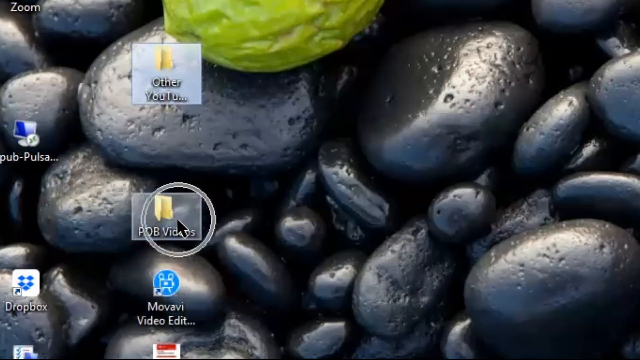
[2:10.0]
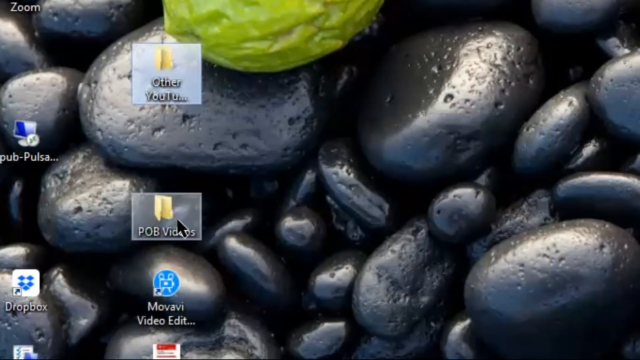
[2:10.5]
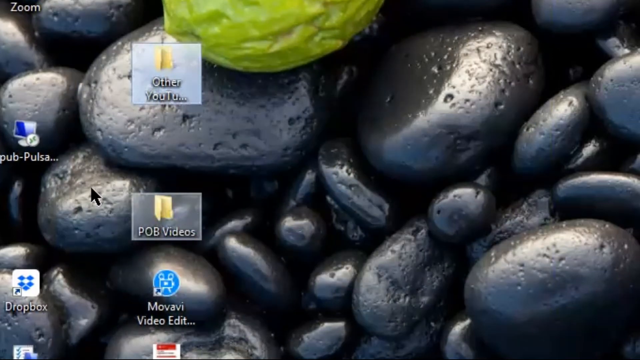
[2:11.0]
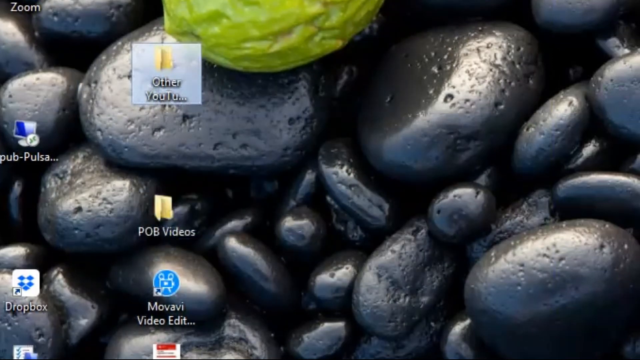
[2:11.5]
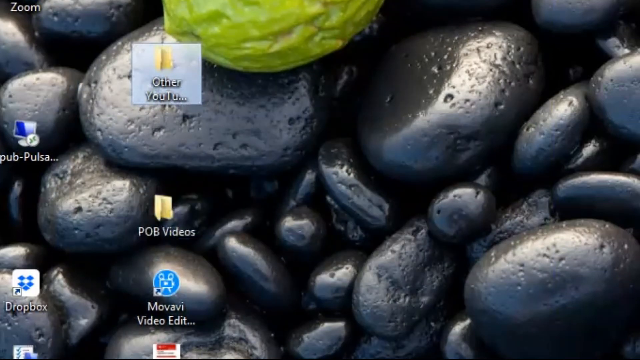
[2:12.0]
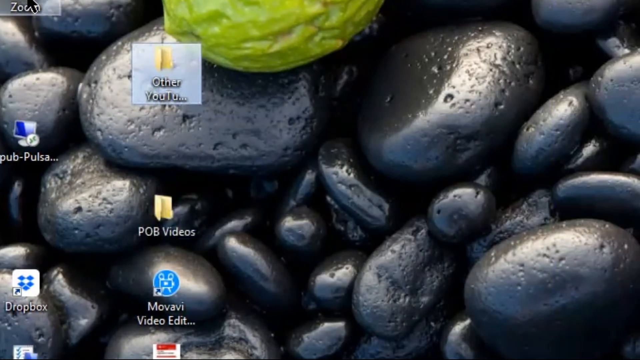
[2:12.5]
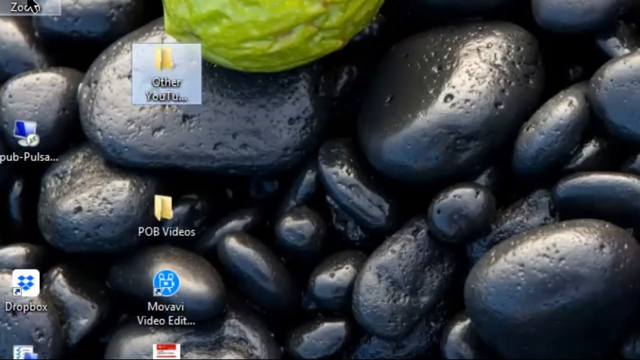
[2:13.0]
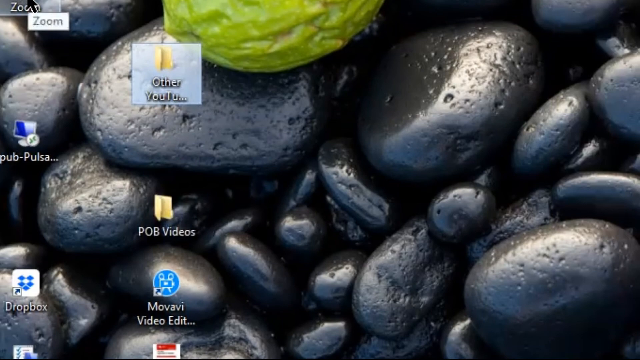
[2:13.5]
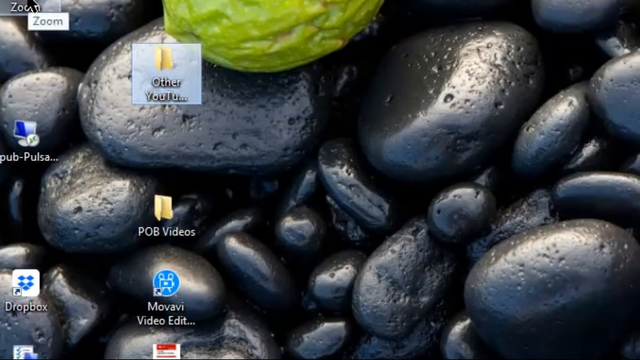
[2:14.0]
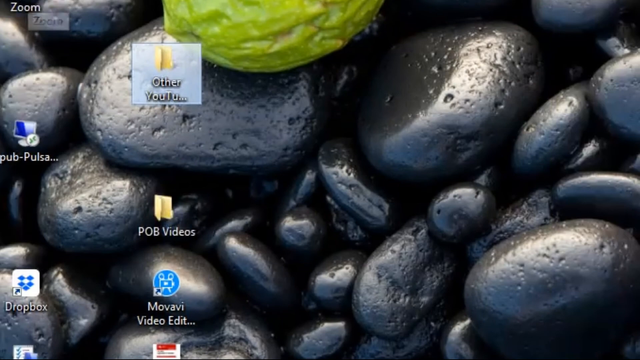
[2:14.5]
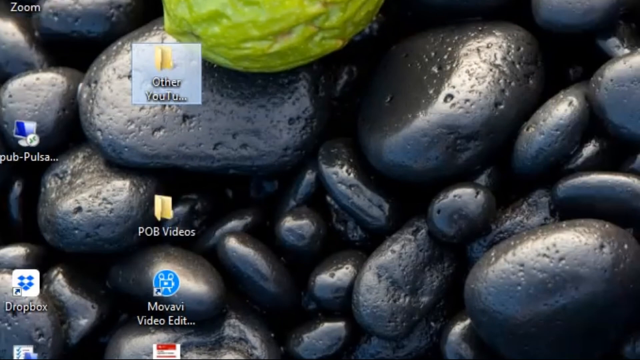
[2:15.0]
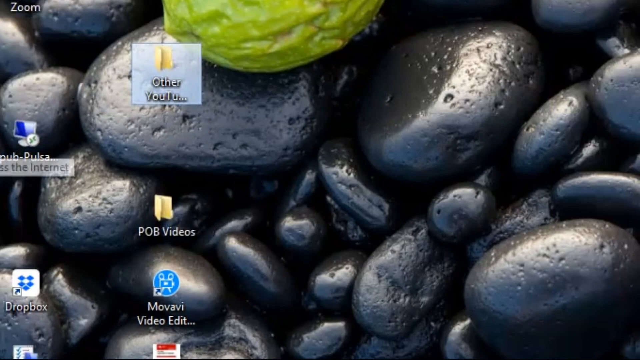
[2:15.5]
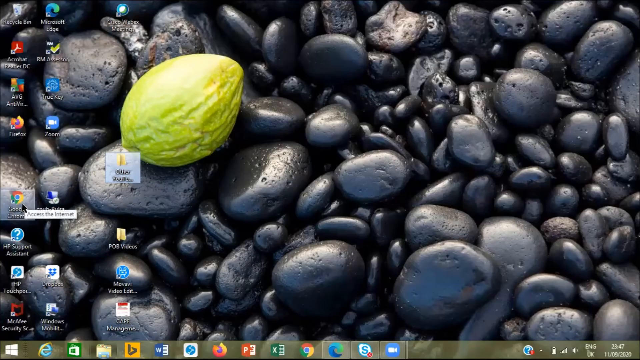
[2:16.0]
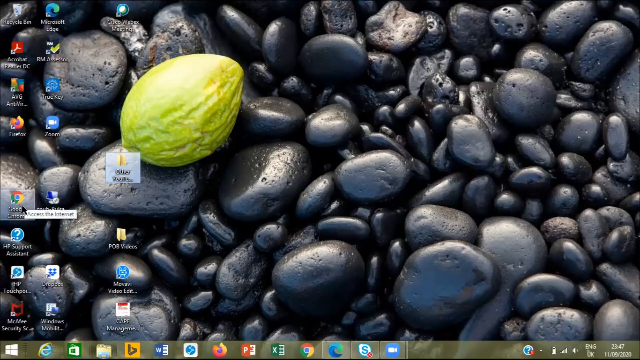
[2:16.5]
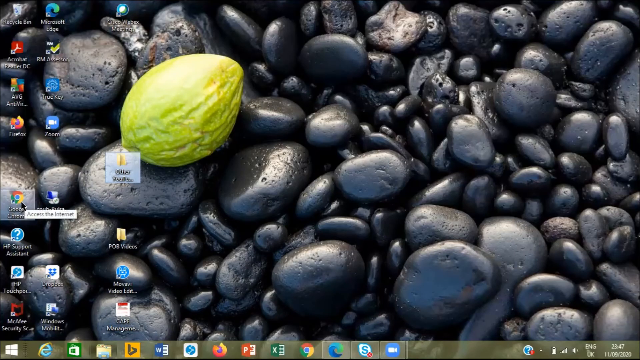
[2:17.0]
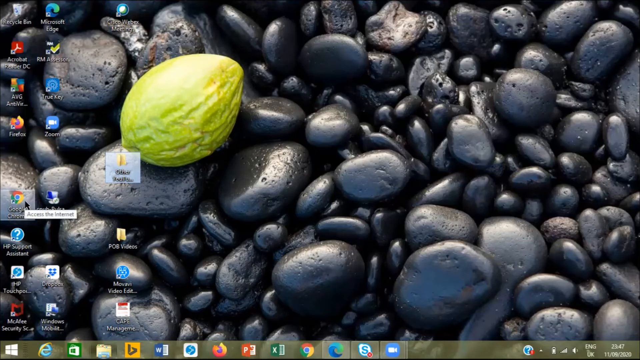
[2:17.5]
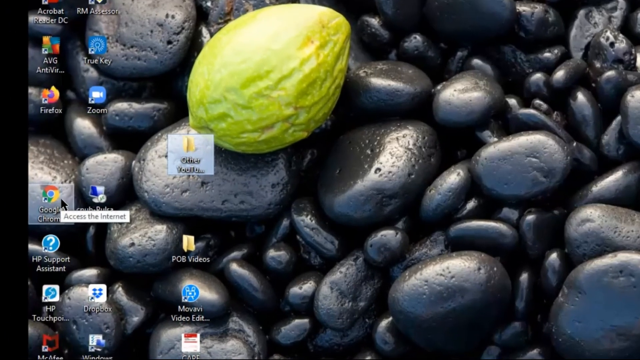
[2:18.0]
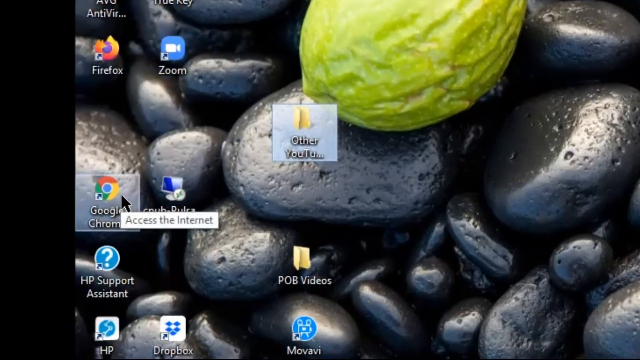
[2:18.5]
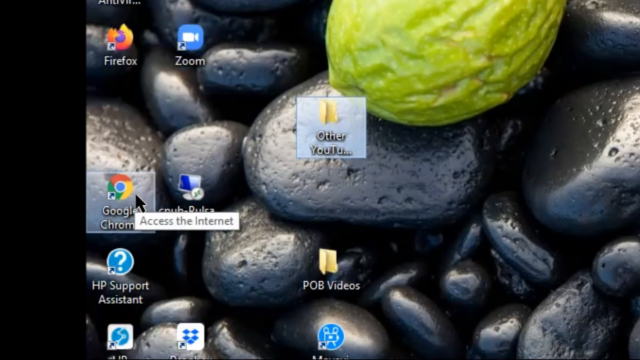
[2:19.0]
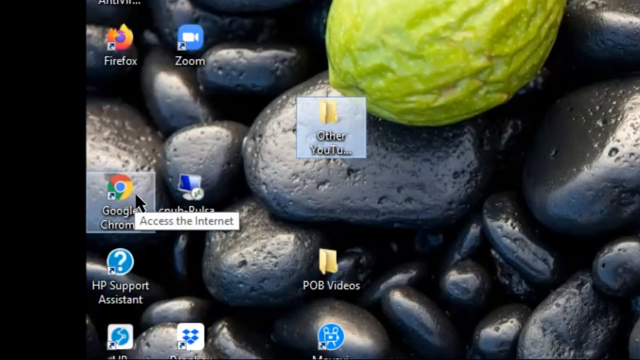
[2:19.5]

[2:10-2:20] POV videos is not clicked; the mouse goes up to the top, but it cannot be seen because the view is zoomed in on POV videos. The view zooms back out, and the mouse hovers over Google Chrome, where a little pop-up says "access the internet". The view zooms in on it, revealing other items on the computer: Firefox, Zoom, an HP Support item, a file labeled "Other", and YouTube. When any of these is selected, a gray shadow box kind of appears over it. There is also something for Dropbox.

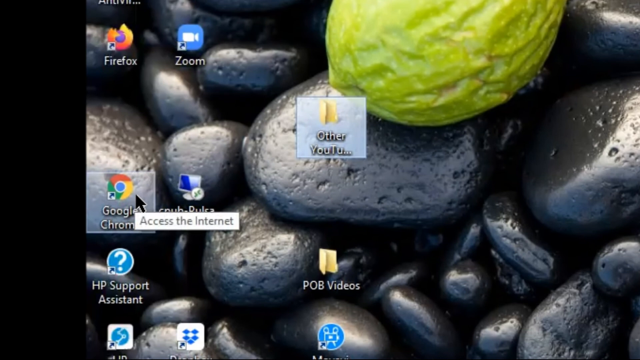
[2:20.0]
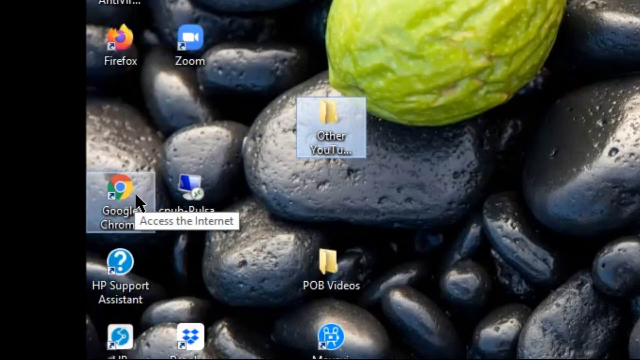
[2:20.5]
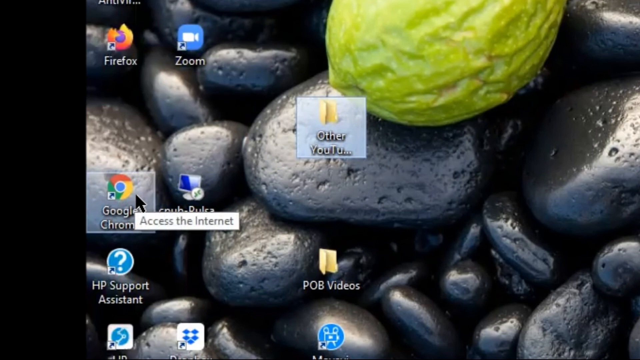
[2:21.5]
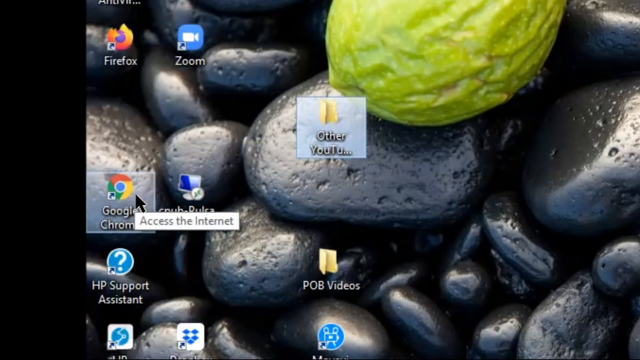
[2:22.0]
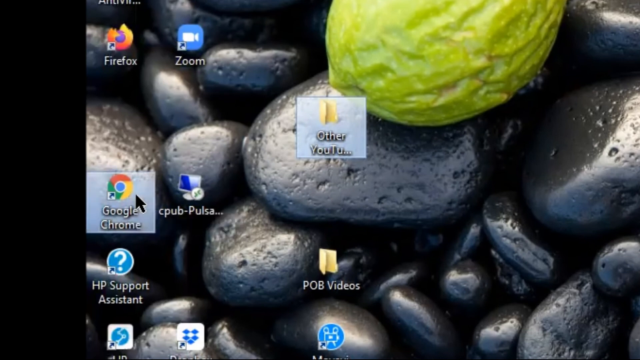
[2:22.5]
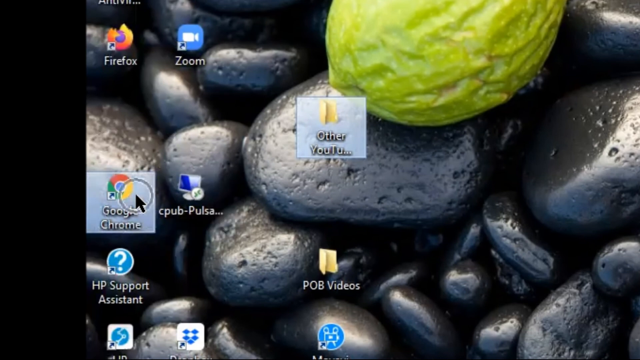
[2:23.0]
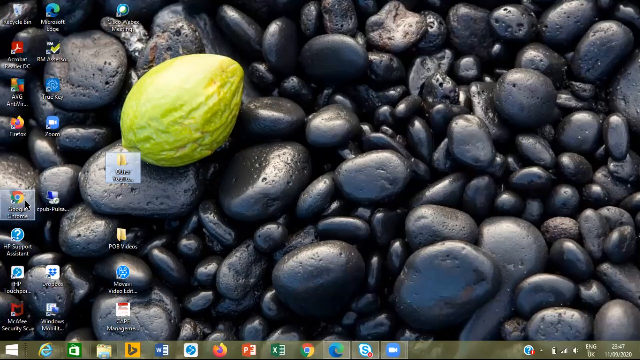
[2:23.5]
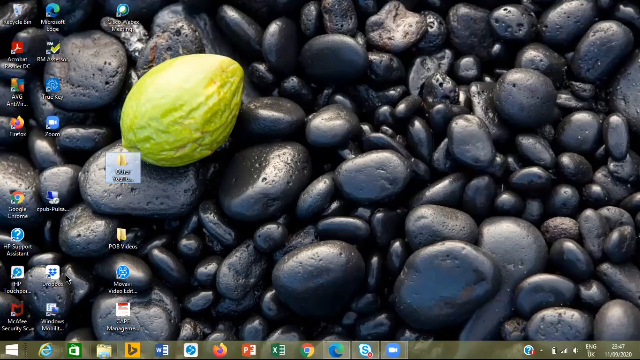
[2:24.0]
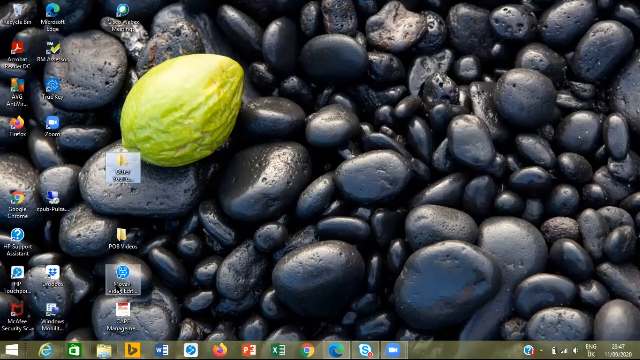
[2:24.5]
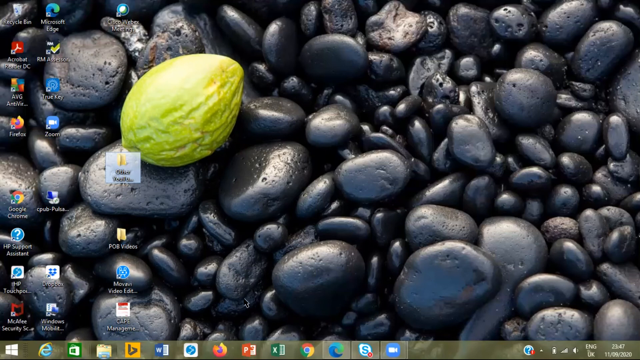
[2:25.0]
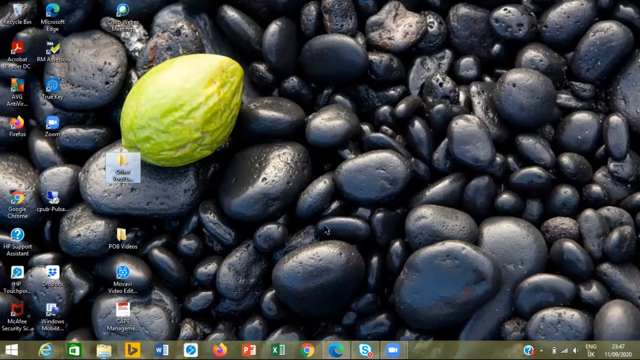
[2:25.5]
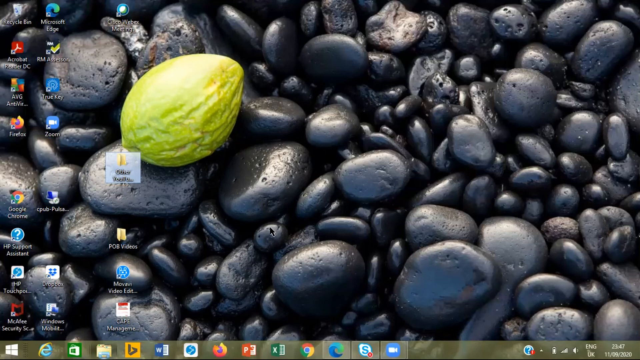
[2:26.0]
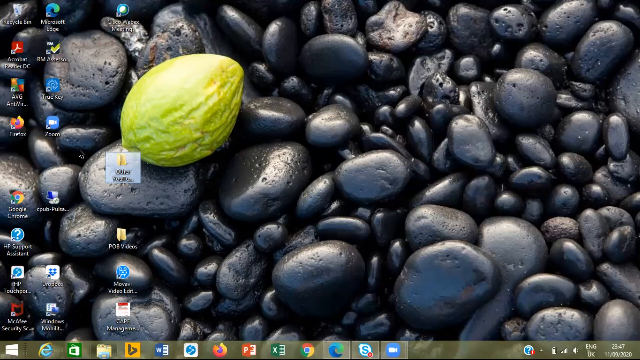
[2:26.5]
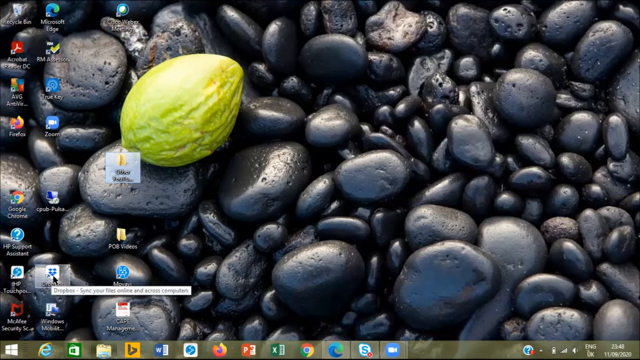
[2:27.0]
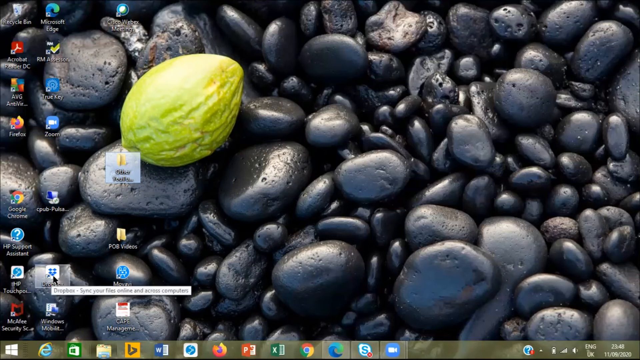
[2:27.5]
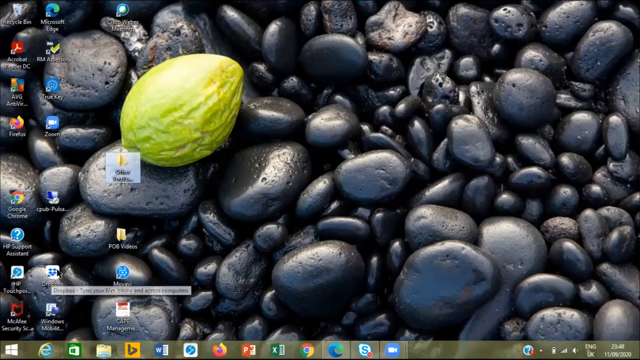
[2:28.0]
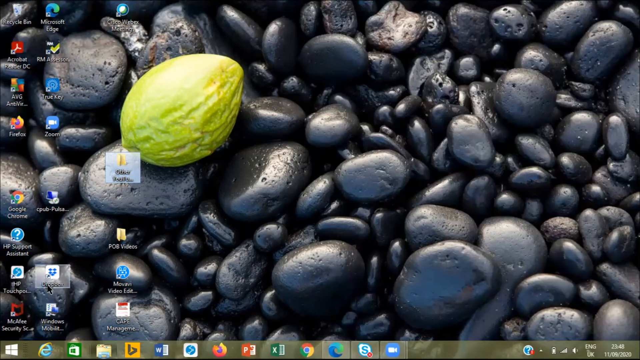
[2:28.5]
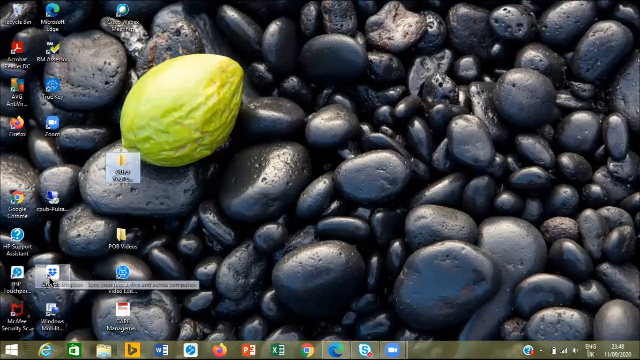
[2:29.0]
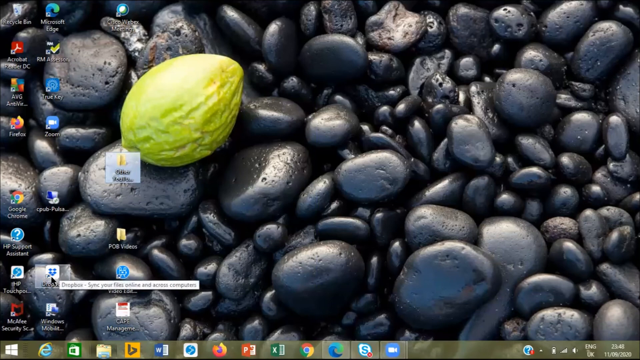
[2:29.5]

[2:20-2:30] The mouse is over Google Chrome and then kind of moves all around the computer screen. The Dropbox icon is clicked, and the view is zoomed in on it. At the very top there is also an Acrobat for PDF files, a Recycle Bin, Microsoft Edge and AVG. The cursor looks like a traditional black arrow that is kind of cut in half. On the home screen, only the left side, about a quarter of it, has icons; the rest is the black background with the river rocks and the piece of what looks like fruit on it.